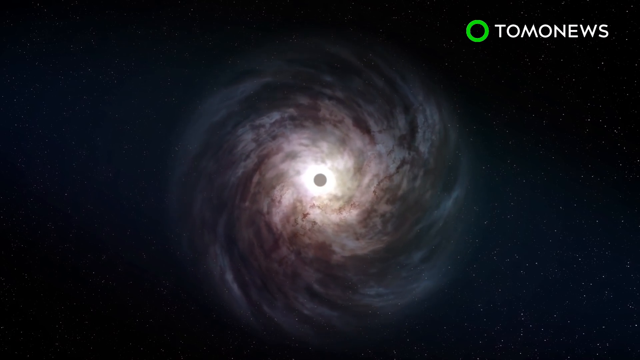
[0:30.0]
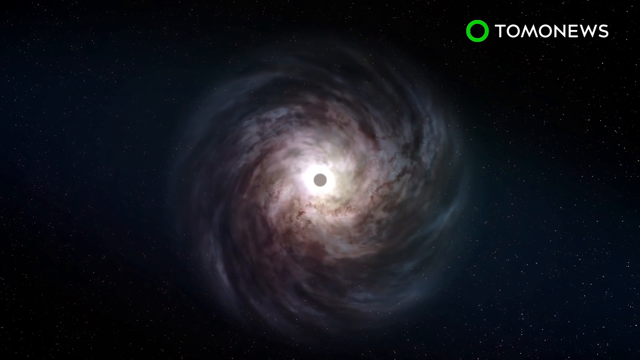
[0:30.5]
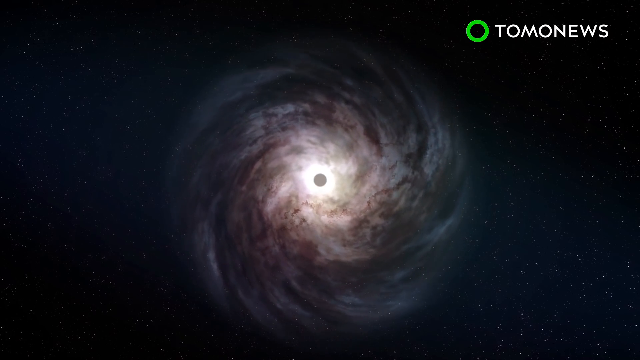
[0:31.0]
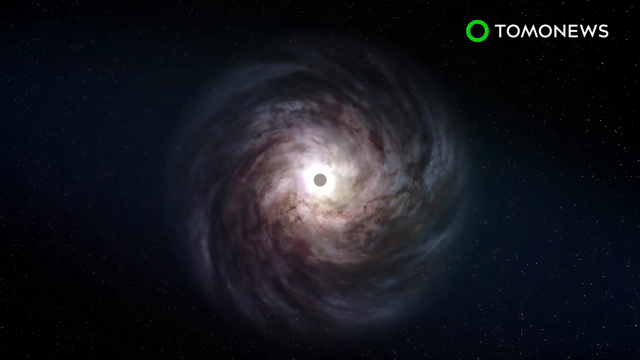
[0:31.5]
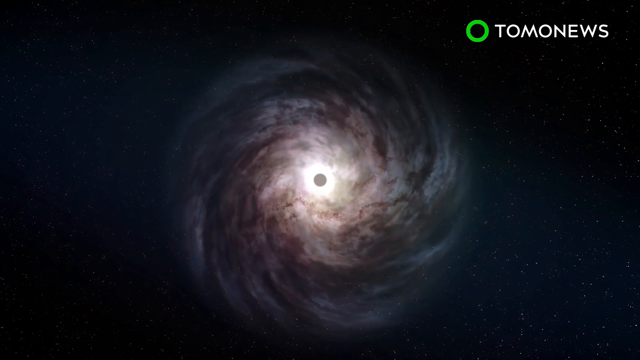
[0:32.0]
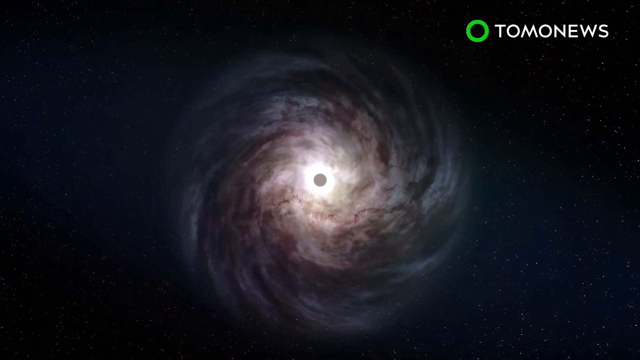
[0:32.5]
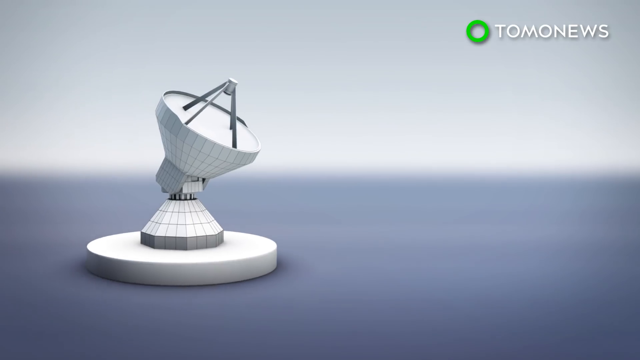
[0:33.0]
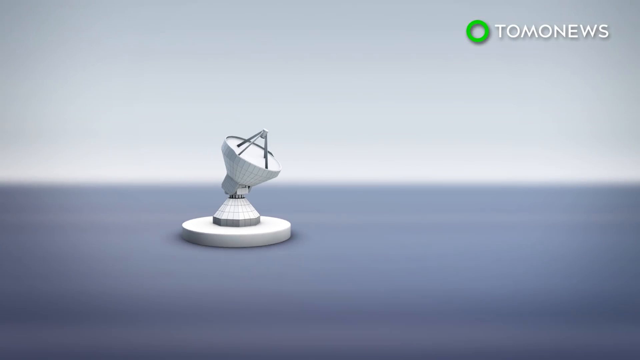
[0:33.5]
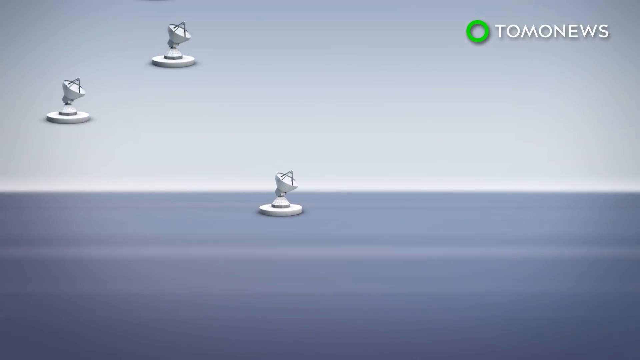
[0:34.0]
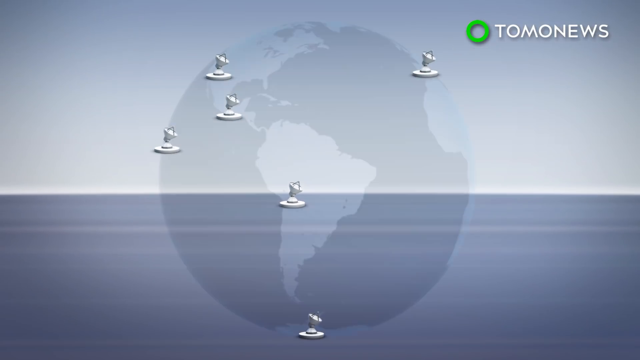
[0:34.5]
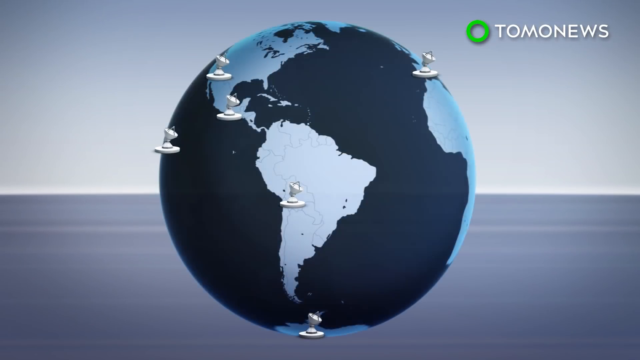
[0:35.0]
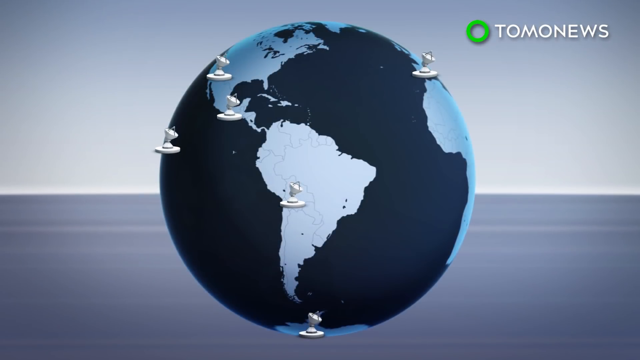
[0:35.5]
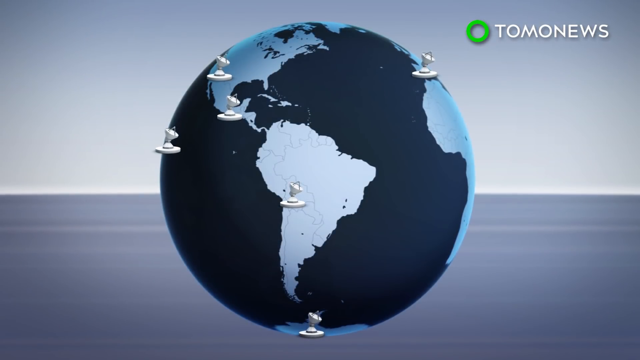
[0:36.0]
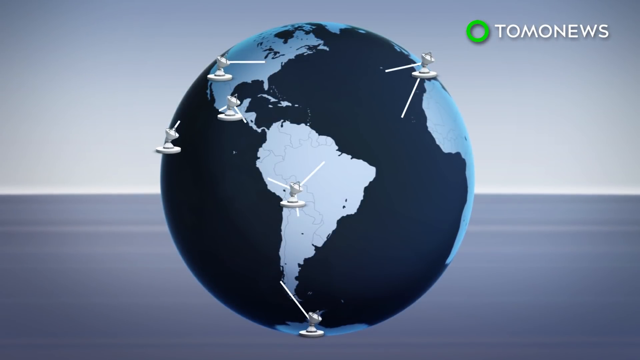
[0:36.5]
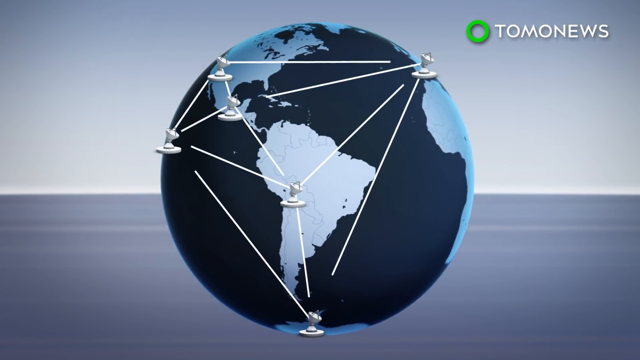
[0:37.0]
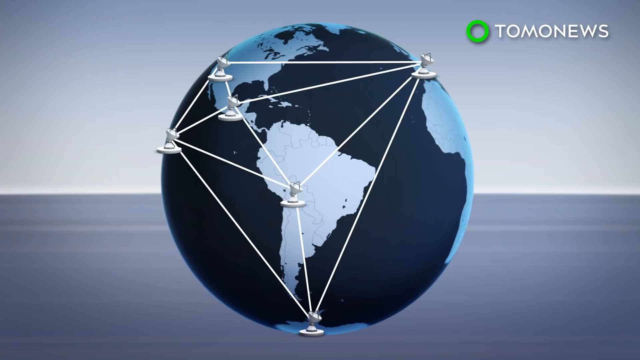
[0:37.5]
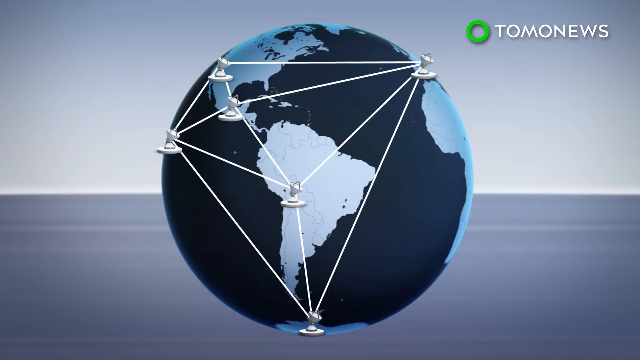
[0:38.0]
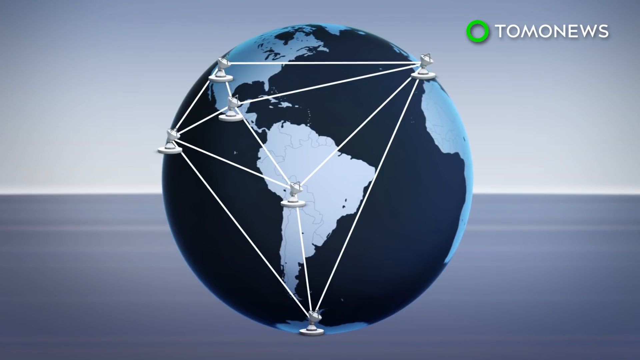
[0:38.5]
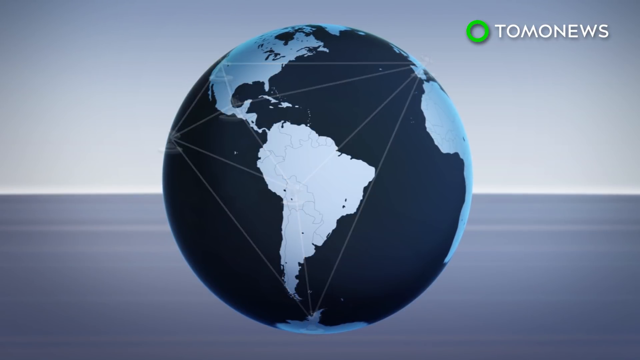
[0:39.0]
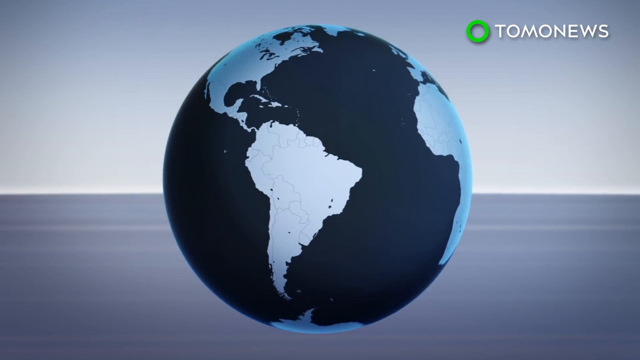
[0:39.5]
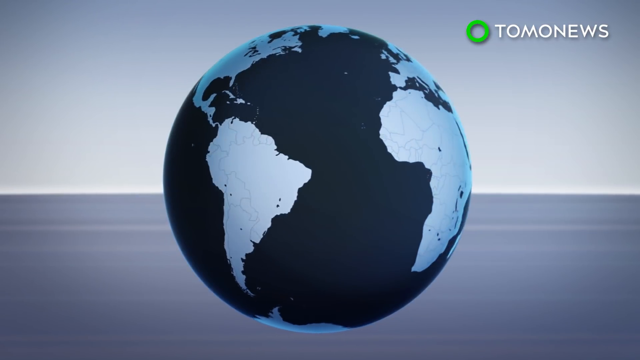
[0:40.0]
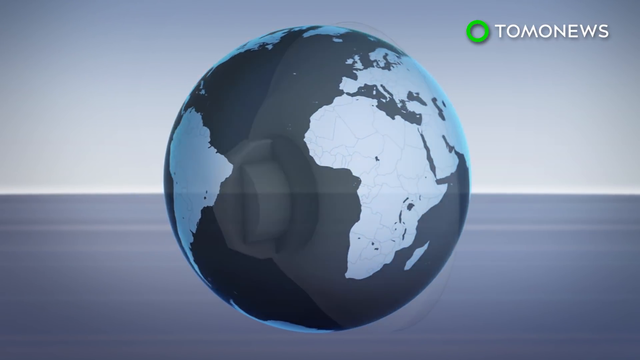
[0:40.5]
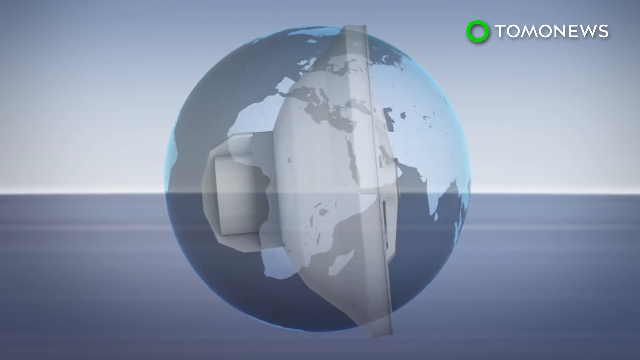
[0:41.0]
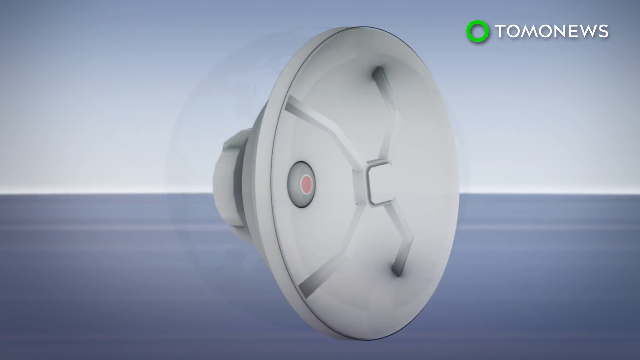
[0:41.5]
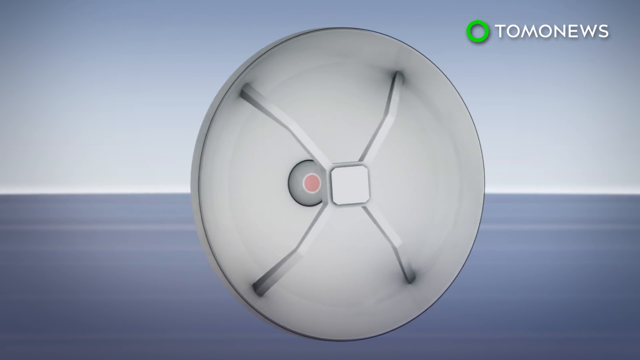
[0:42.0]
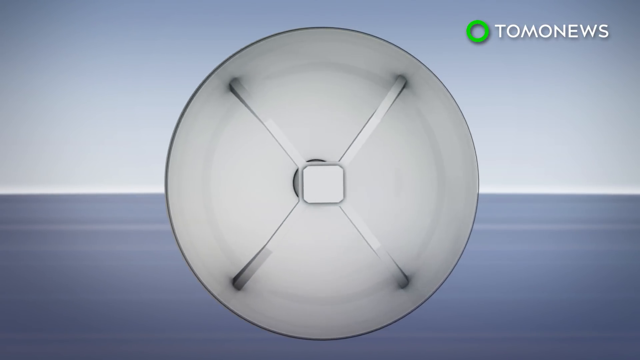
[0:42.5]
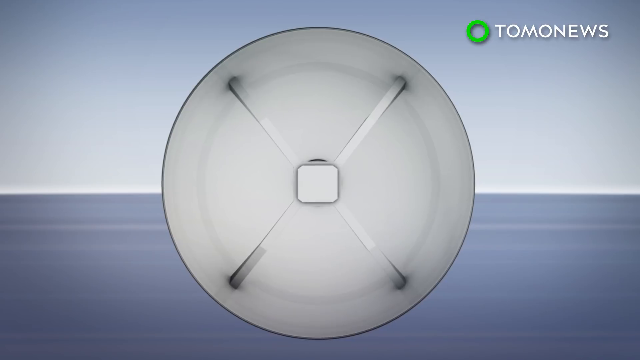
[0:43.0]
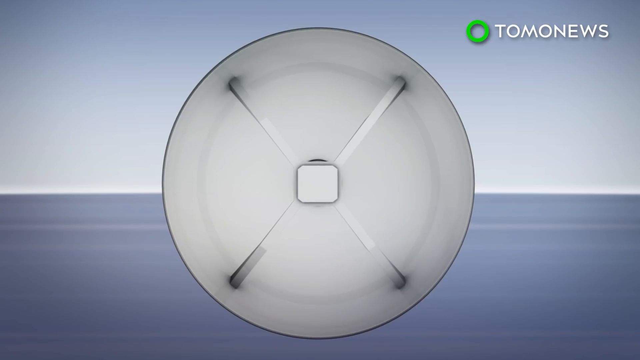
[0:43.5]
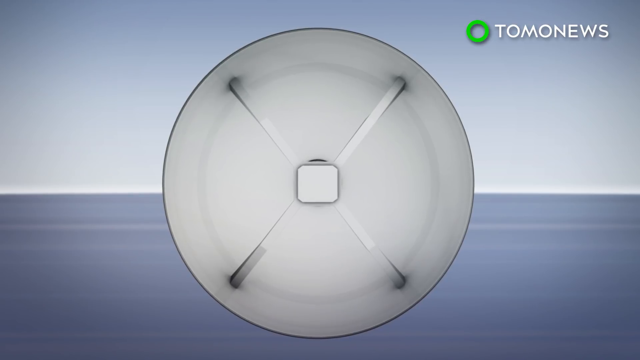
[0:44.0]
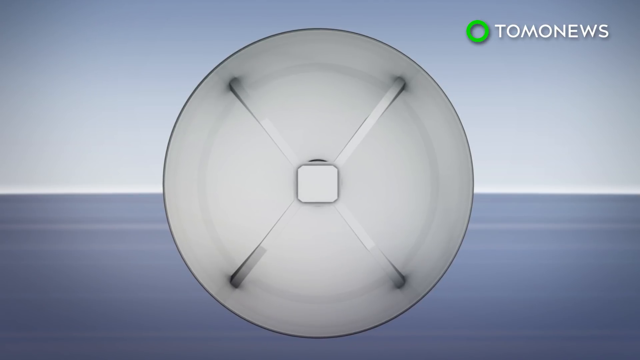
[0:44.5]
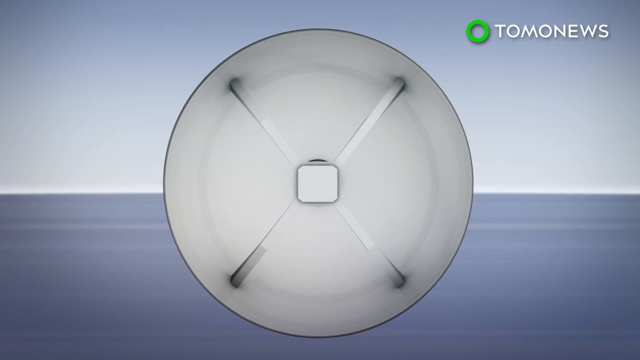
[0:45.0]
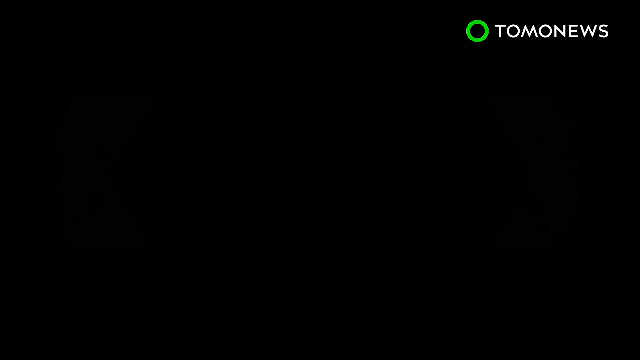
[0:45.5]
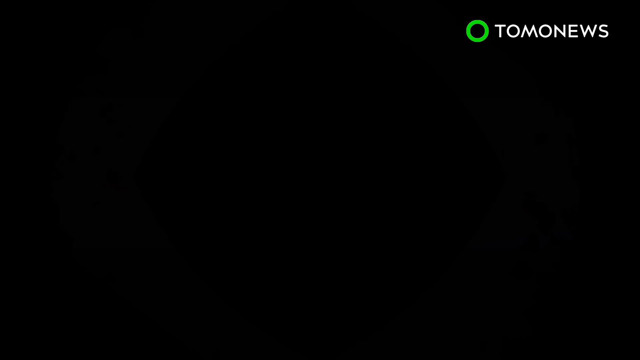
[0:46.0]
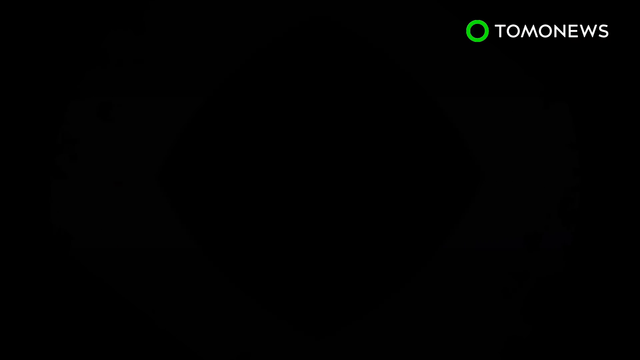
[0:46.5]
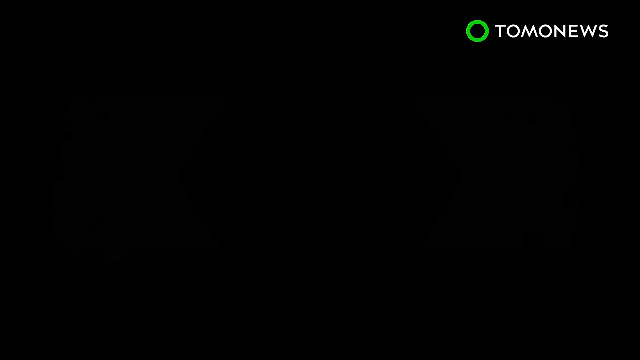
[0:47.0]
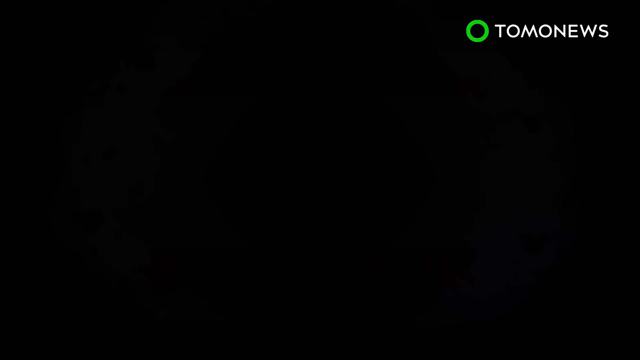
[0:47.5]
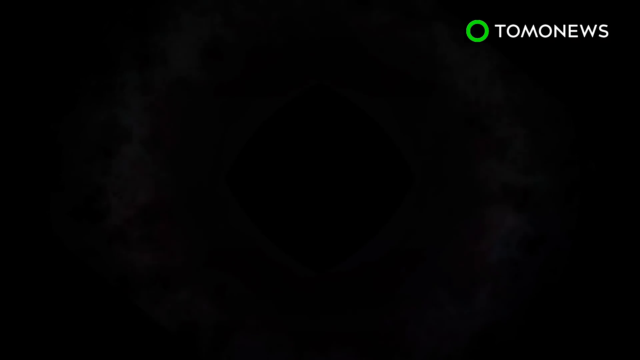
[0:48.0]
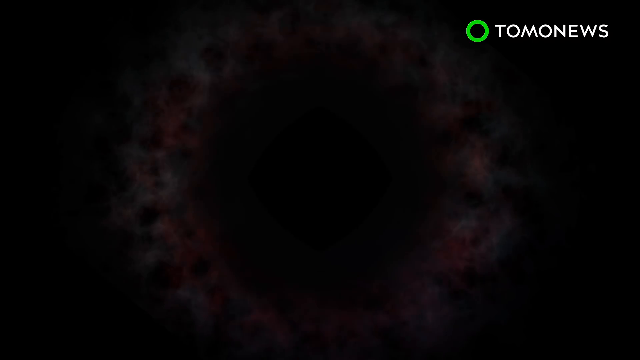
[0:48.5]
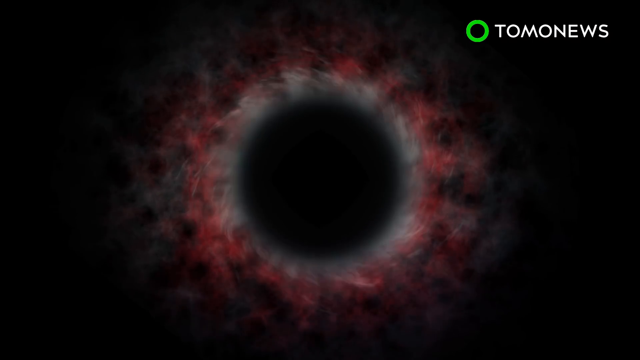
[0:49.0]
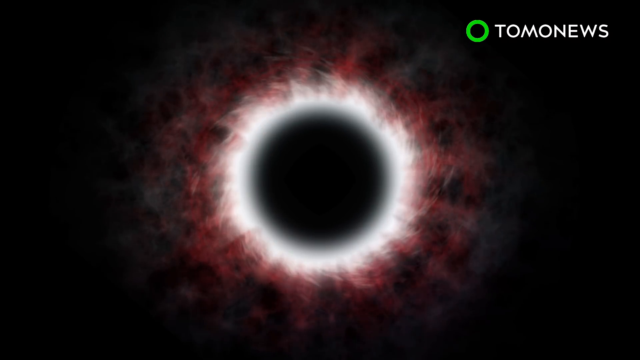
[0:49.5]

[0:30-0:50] Many satellite dishes are on Earth, and there are many things around the sun and the moon, whose colours do not look good. The Event Horizon Telescope is mentioned. A sequence shows the Earth with many satellites around it.